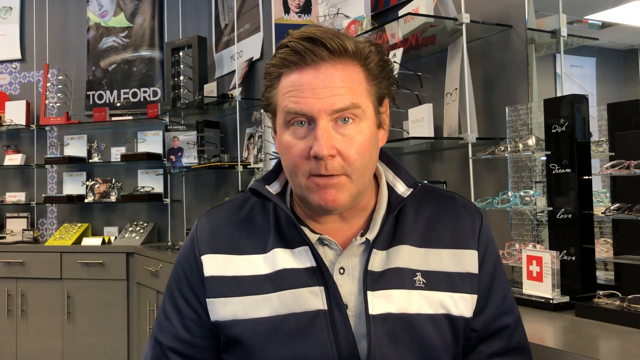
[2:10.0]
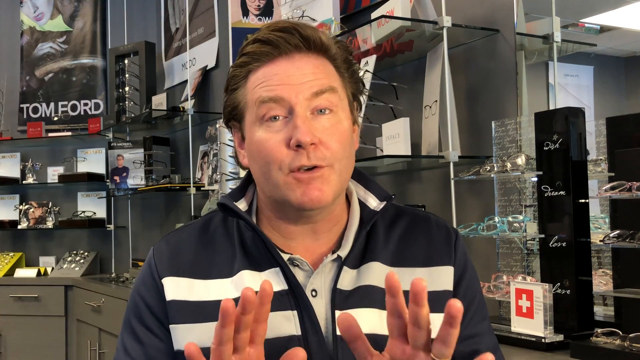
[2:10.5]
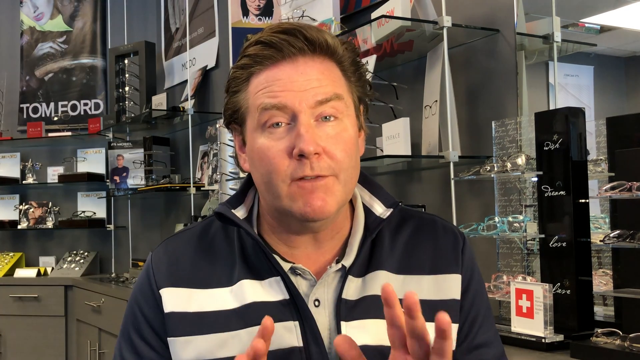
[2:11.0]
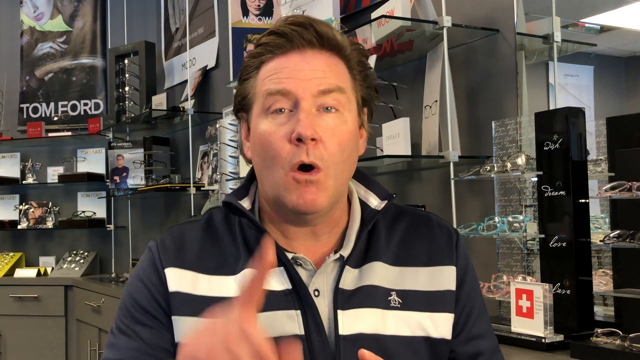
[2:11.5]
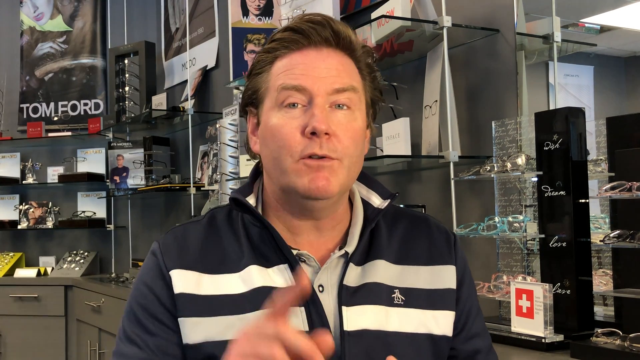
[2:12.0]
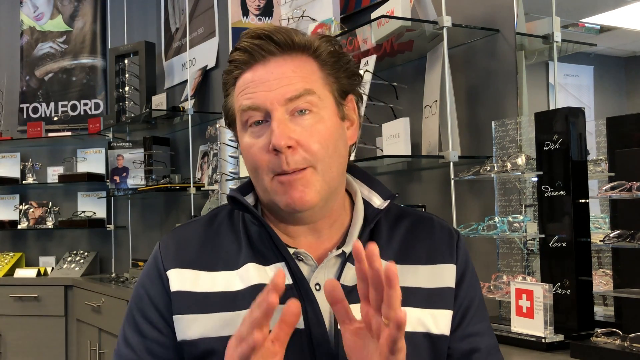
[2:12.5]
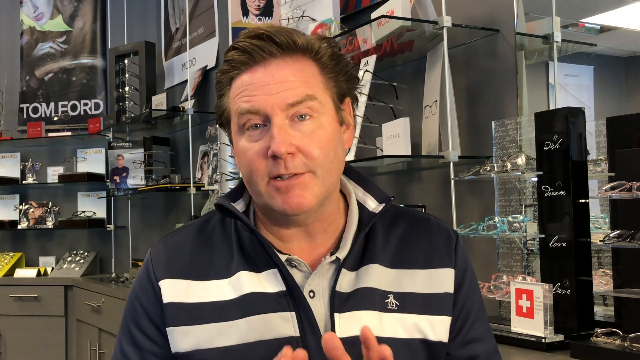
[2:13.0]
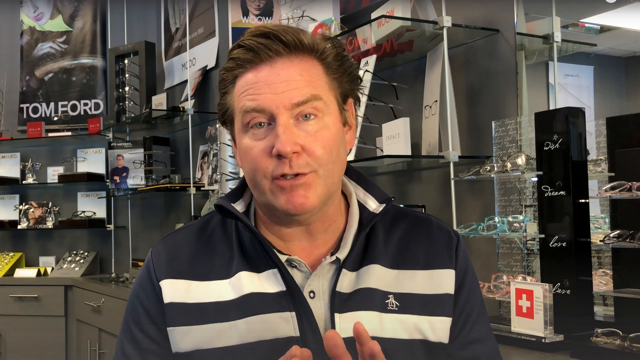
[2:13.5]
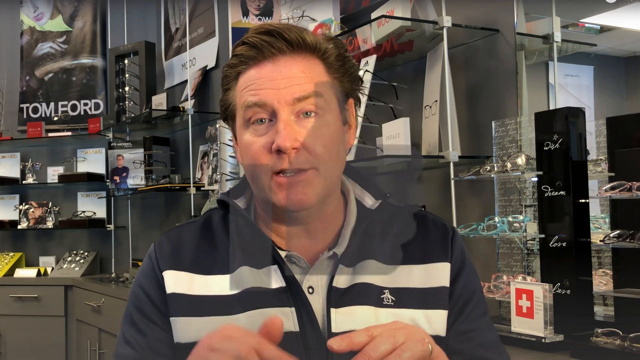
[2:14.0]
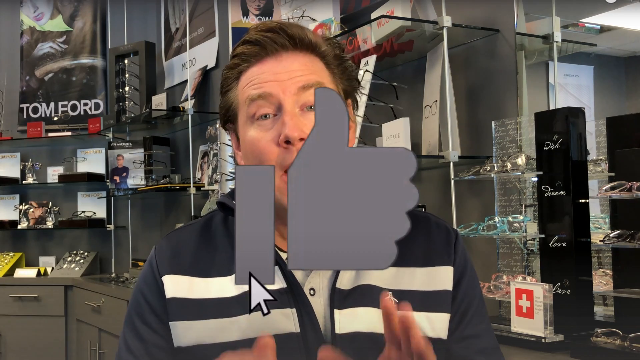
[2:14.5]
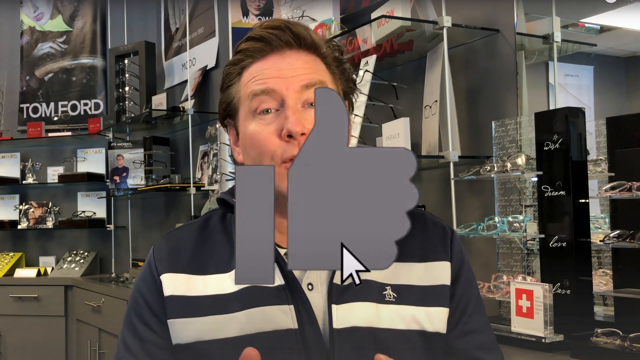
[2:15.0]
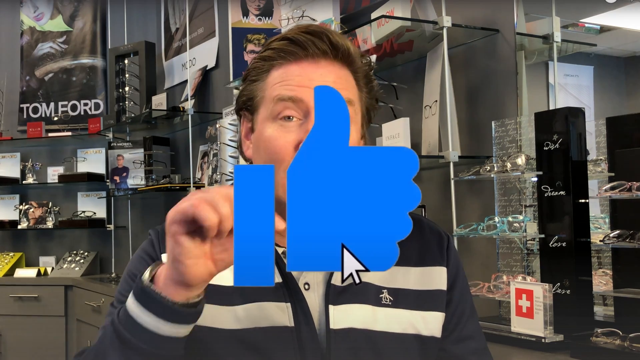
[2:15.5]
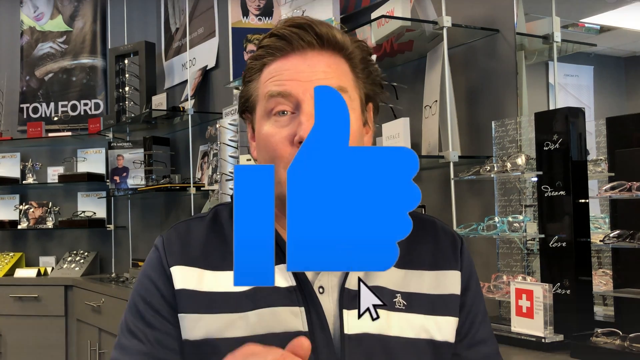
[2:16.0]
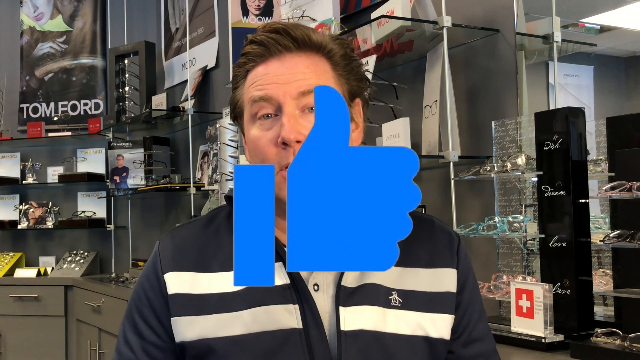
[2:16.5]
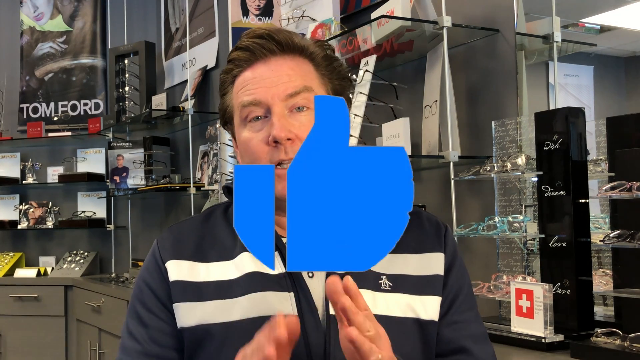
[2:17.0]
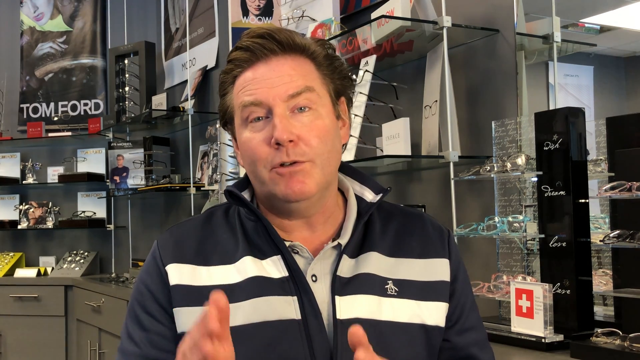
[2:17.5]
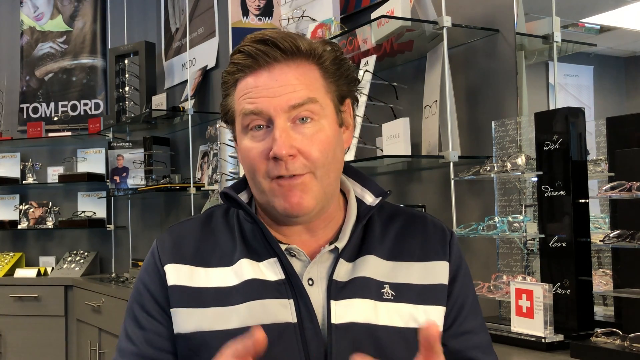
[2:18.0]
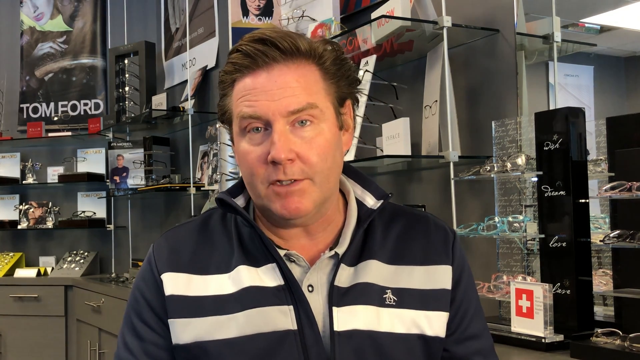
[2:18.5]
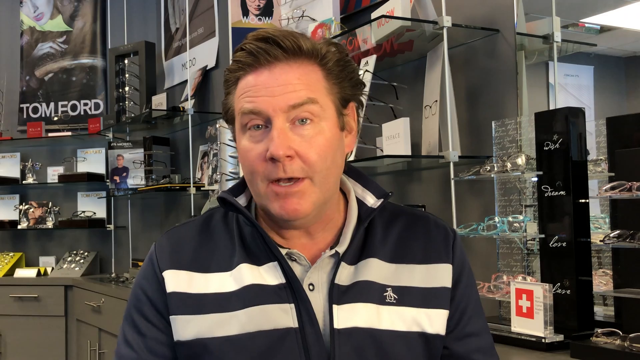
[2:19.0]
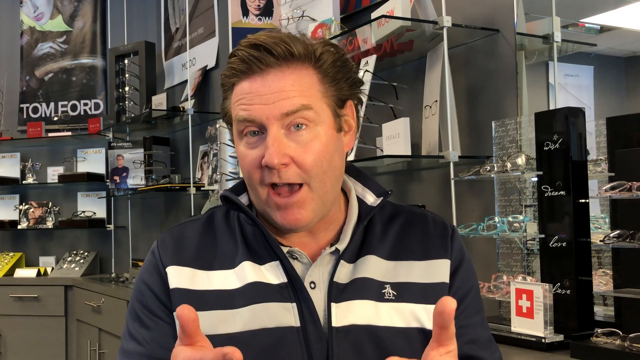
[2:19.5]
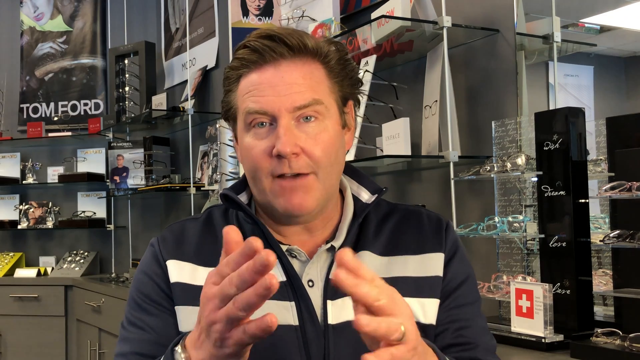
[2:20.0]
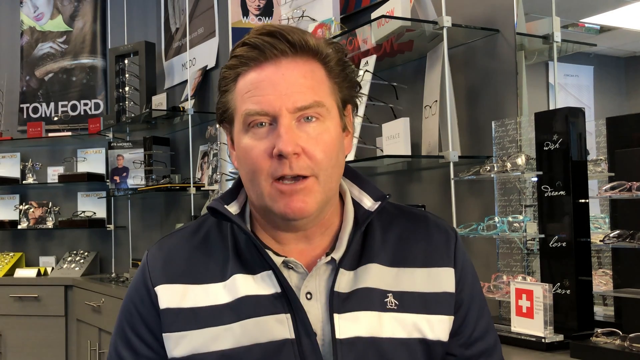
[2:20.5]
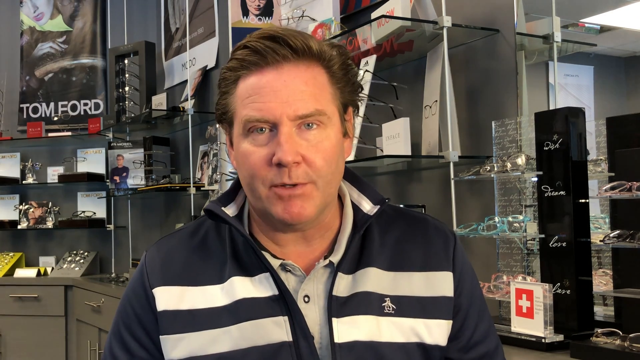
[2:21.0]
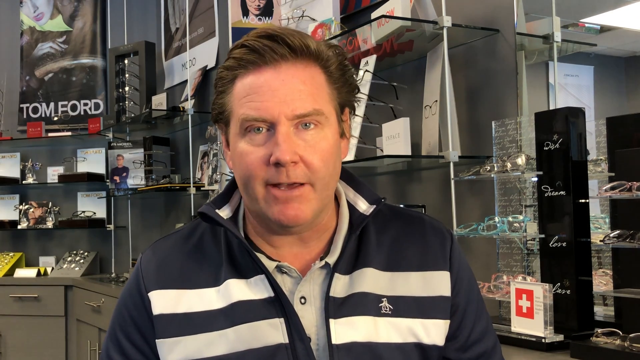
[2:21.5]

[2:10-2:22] The short-haired, brown-haired Caucasian man makes hand motions as he talks in the optometry setting, with a Tom Ford style poster, cupboards and glasses behind him. In an outro, a like button appears on the screen, gray and then blue, as a cursor clicks it. The video then ends. No other people or animals appear.